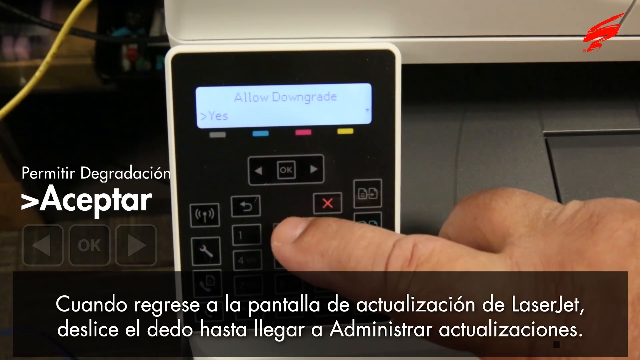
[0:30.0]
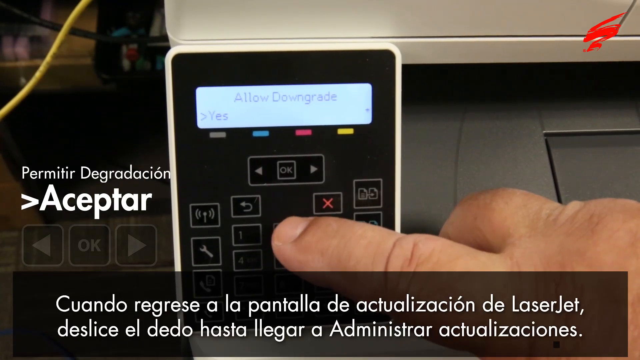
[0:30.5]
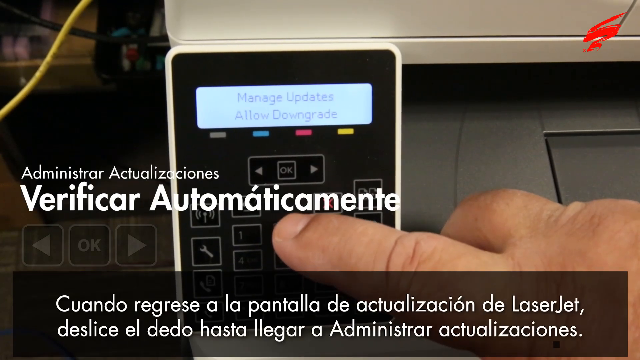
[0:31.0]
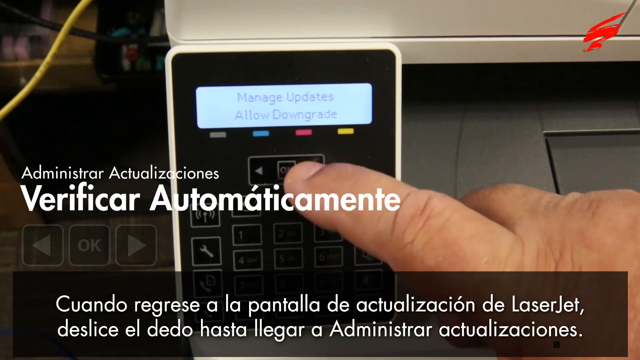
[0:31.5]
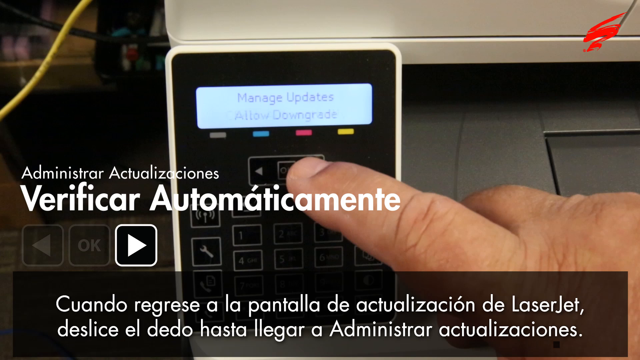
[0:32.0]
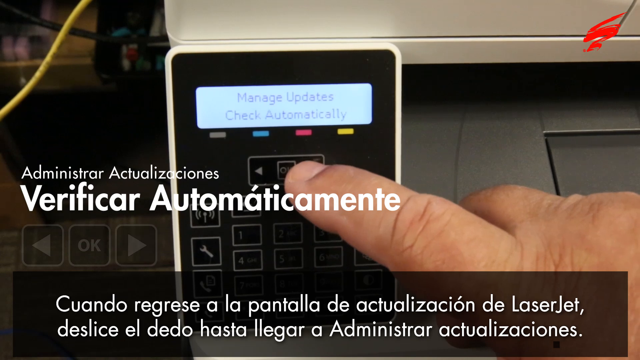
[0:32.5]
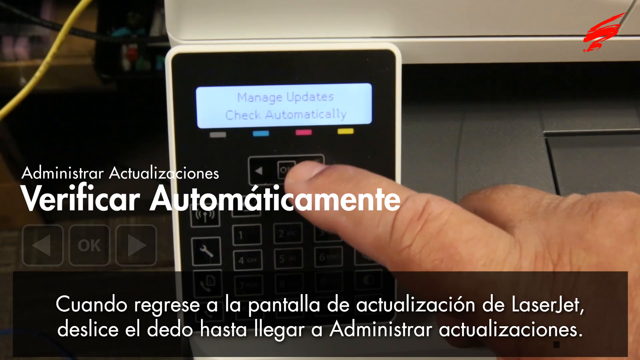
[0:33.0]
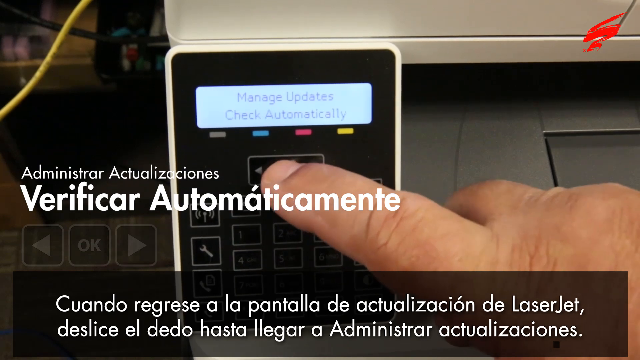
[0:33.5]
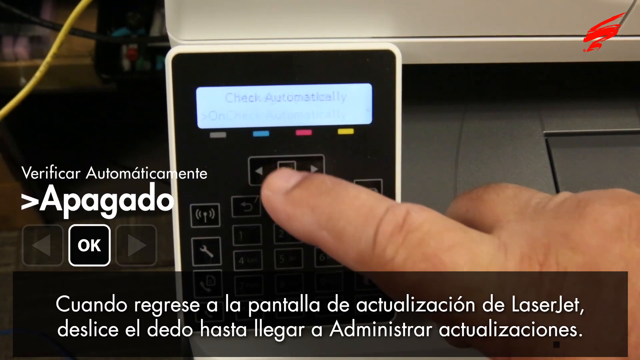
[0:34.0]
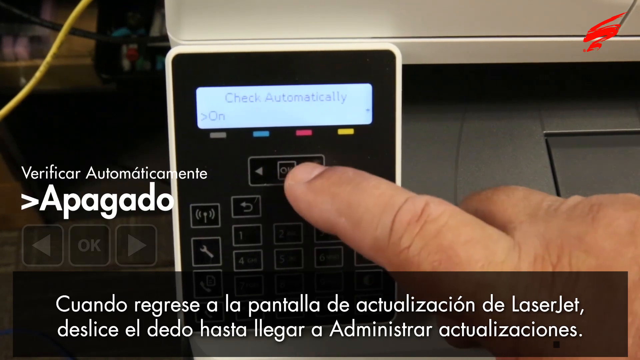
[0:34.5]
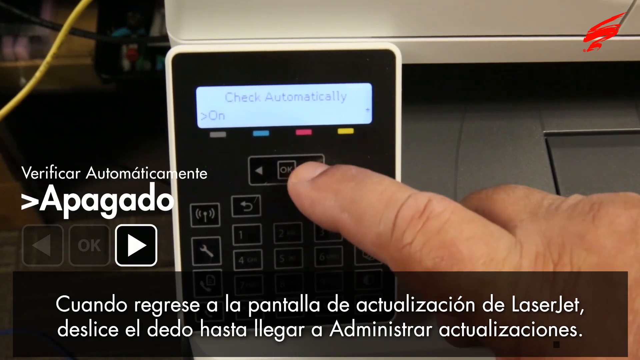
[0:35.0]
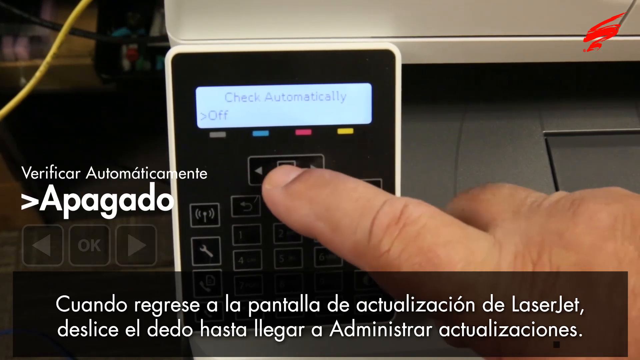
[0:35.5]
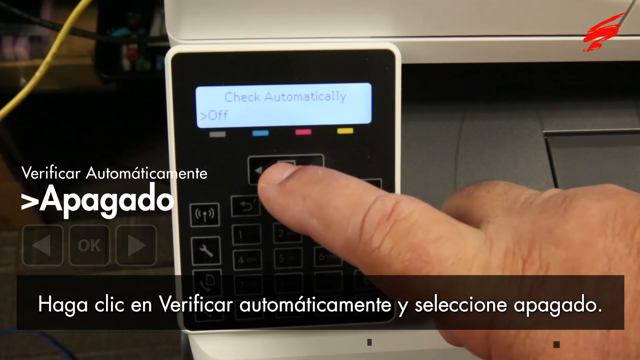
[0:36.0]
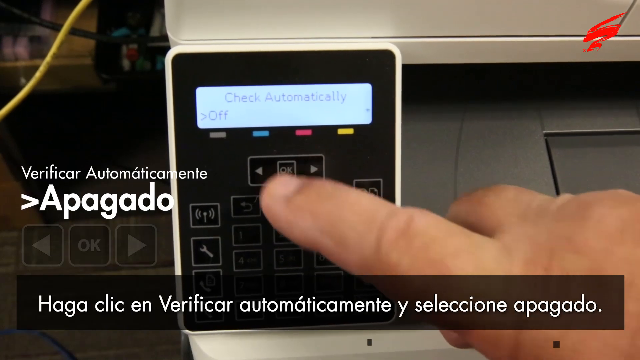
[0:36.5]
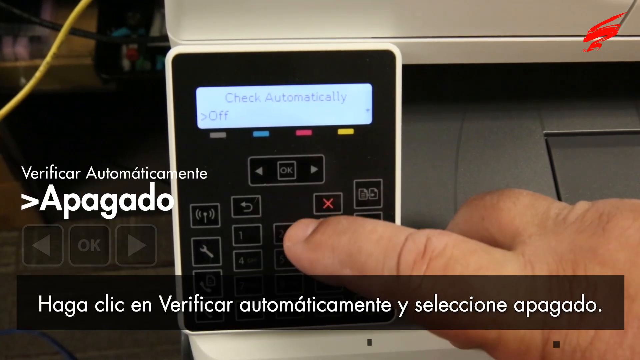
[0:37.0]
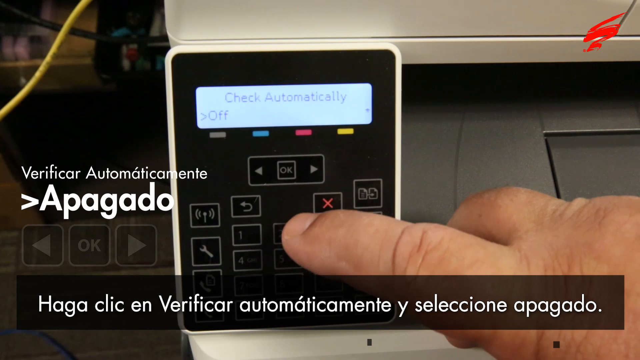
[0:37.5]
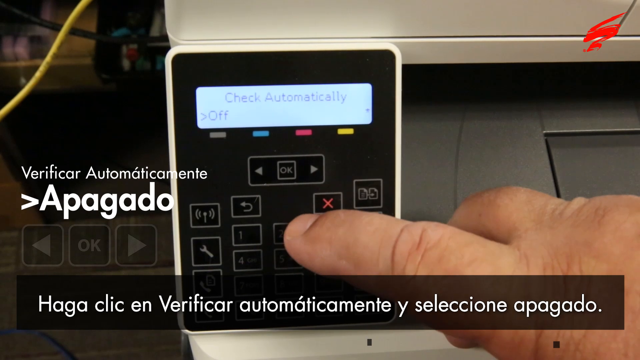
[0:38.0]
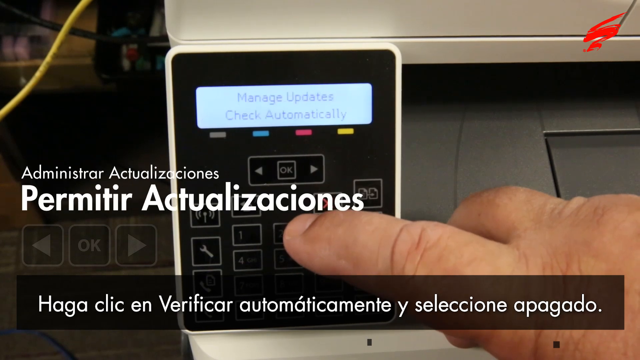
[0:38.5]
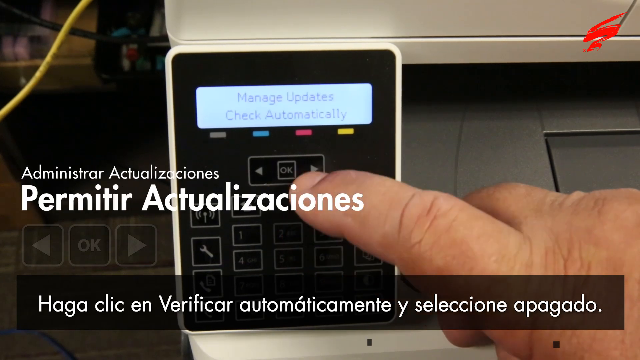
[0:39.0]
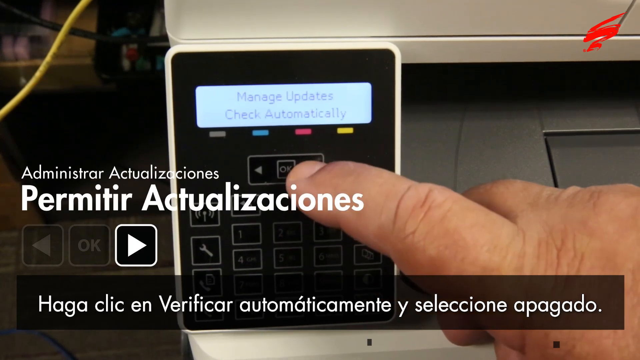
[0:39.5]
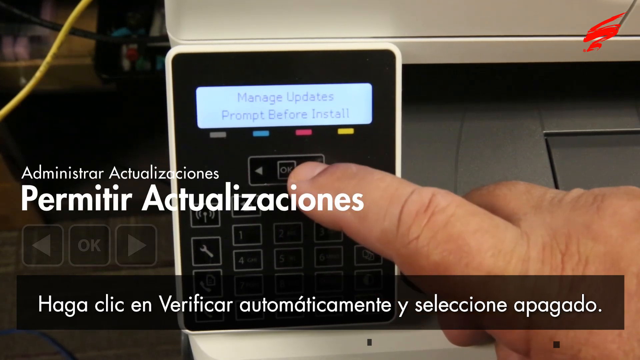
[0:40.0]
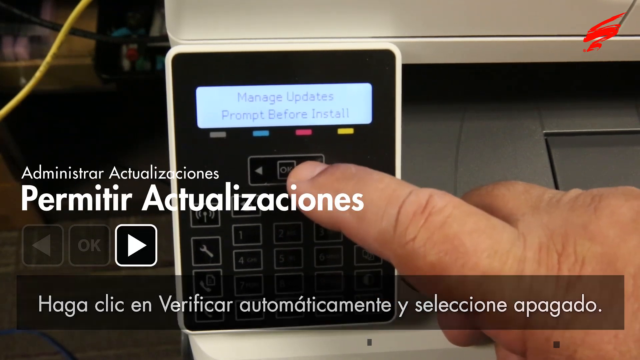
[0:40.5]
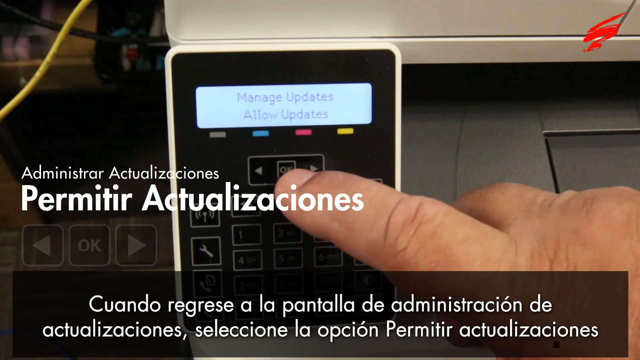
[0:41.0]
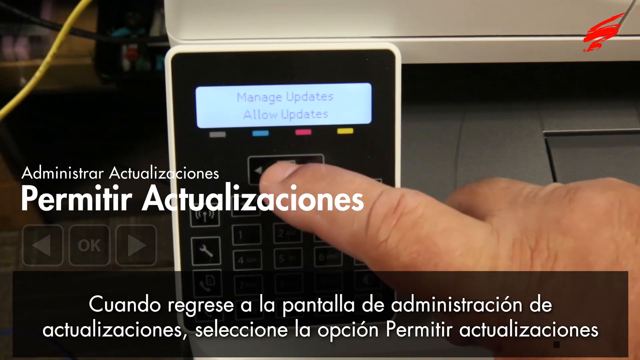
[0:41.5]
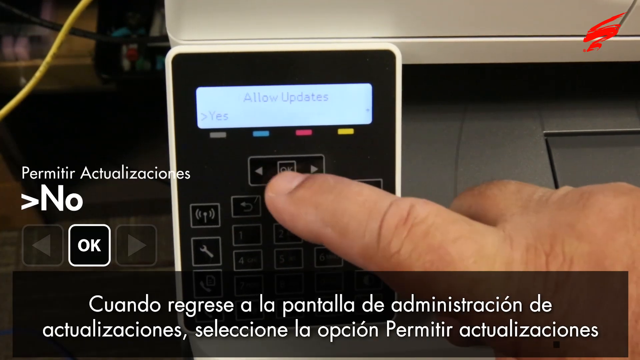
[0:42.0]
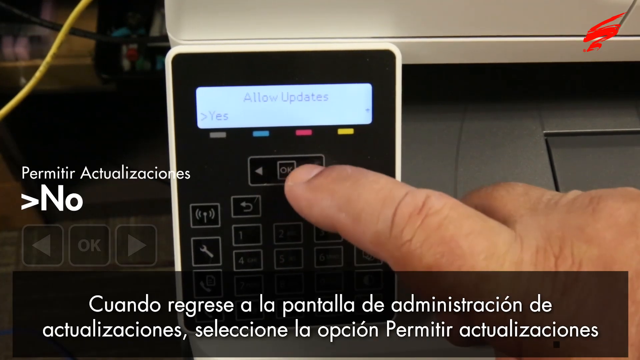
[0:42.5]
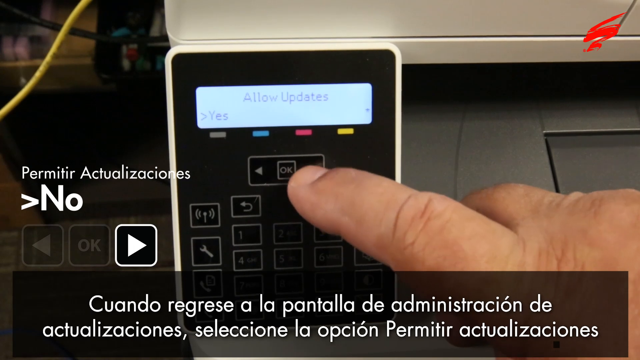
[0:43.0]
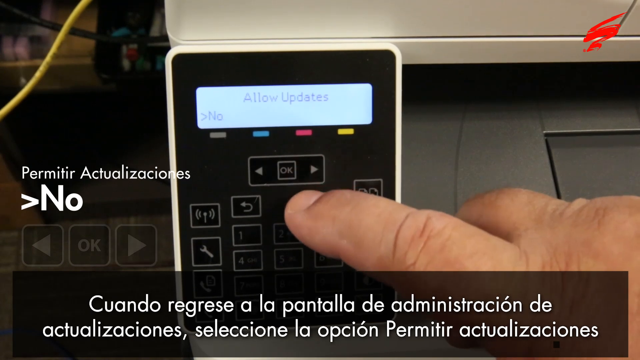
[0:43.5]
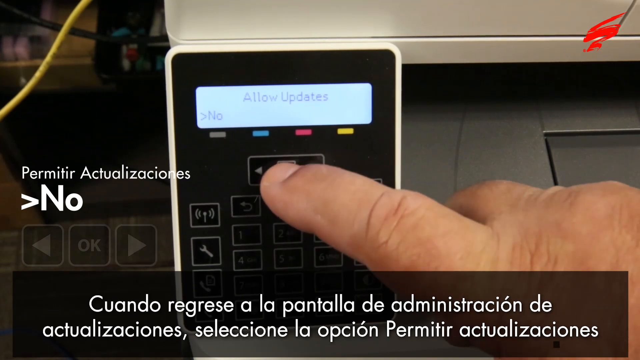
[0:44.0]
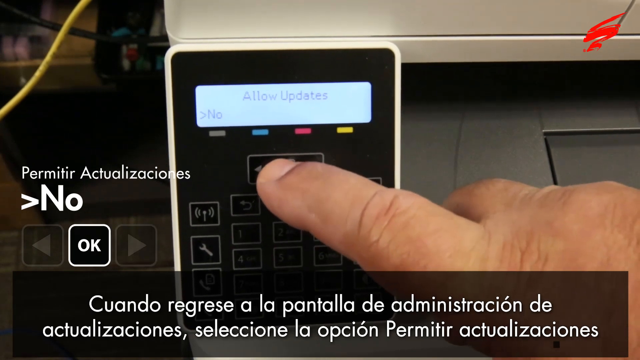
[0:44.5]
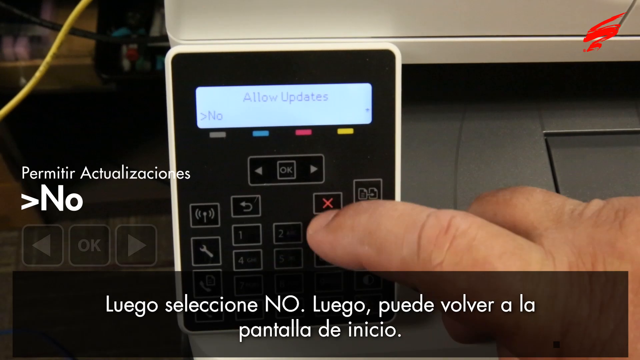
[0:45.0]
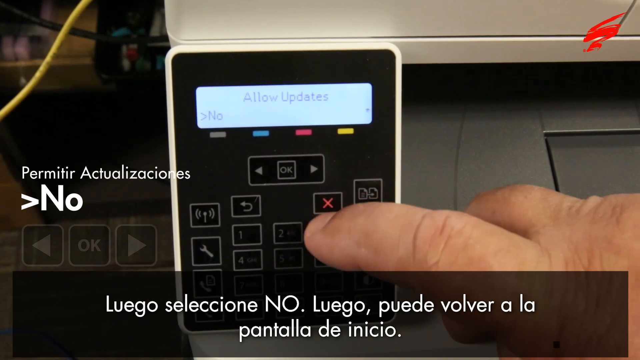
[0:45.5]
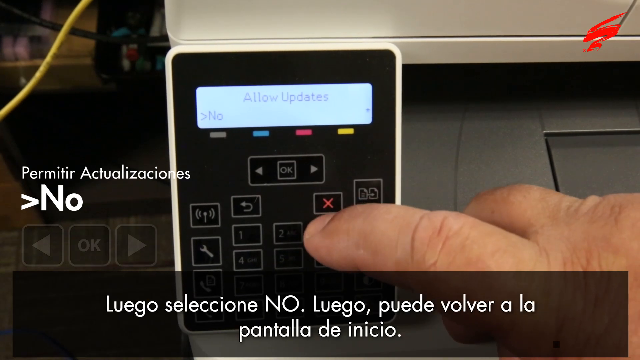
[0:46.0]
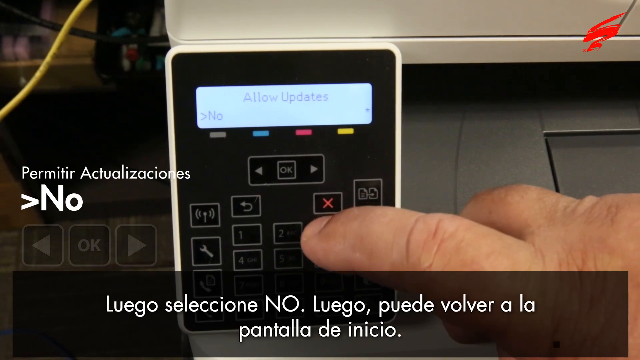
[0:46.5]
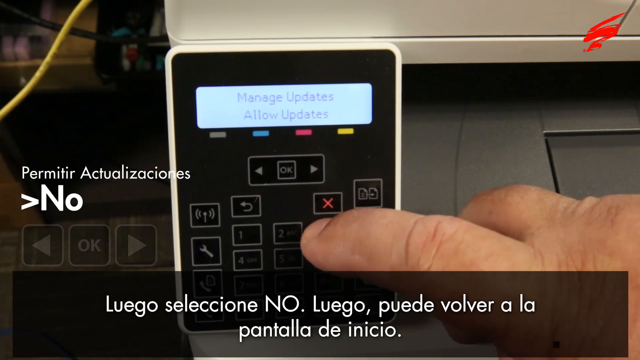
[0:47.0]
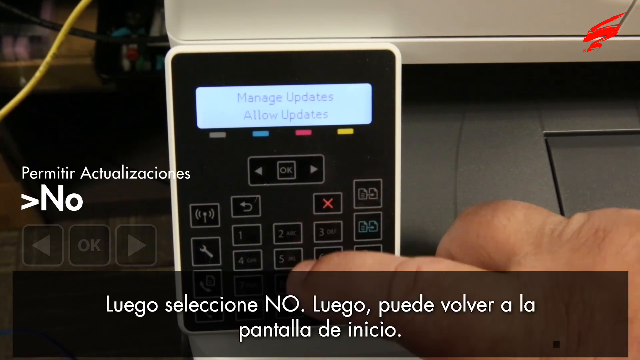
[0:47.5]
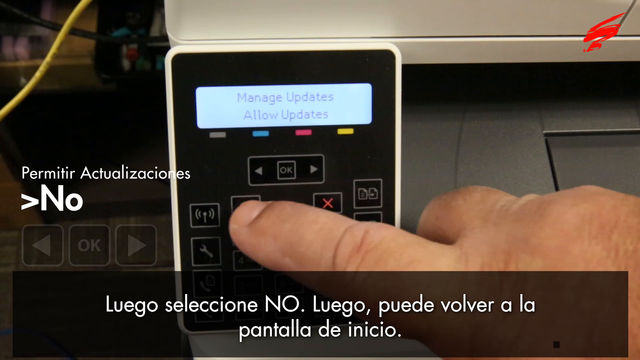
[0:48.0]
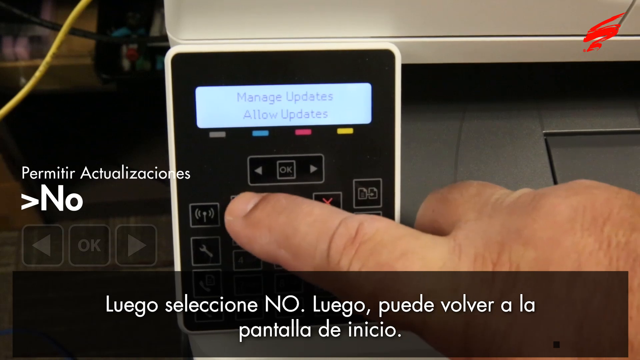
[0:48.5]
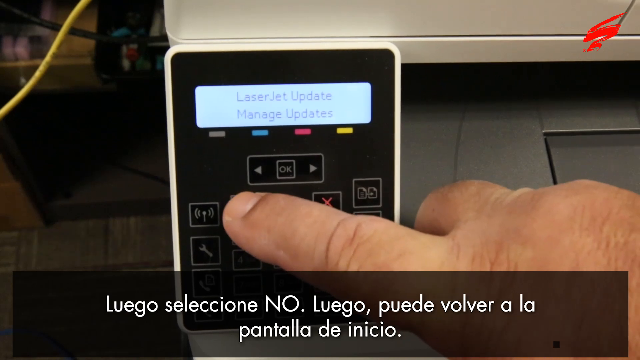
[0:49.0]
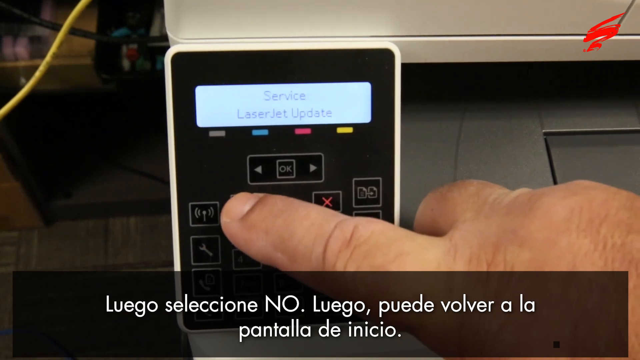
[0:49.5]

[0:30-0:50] The person keeps pressing different buttons on the device's screen. At the top the screen reads "manage updates, check automatically", and then "check automatically" with an option to turn it on or off; apparently the right arrow switches between on and off and OK confirms. The next section reads "allow updates" with a yes or no choice. The screen then returns to "manage updates", and the menu is scrolled by pressing a back arrow key, seemingly moving through different parts of the screen. The screen is fairly brightly lit and its text is easy to read.